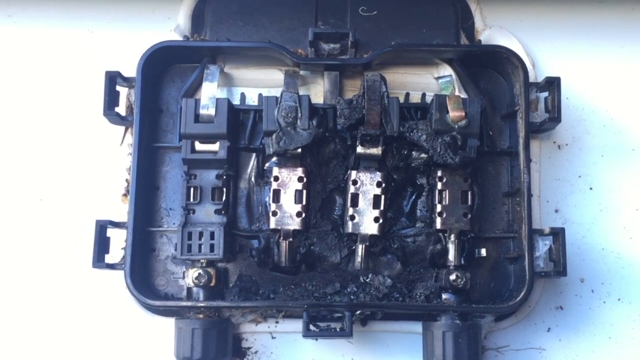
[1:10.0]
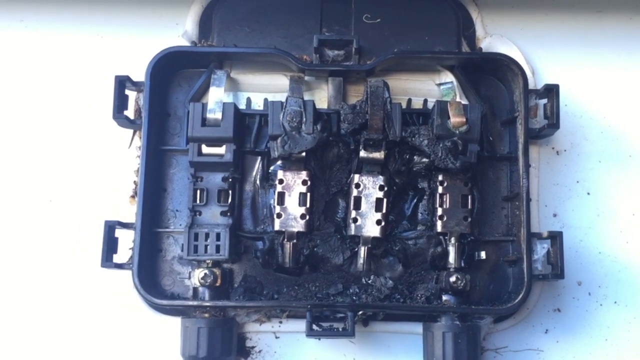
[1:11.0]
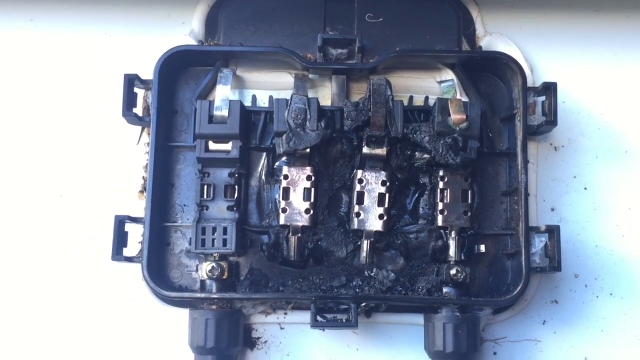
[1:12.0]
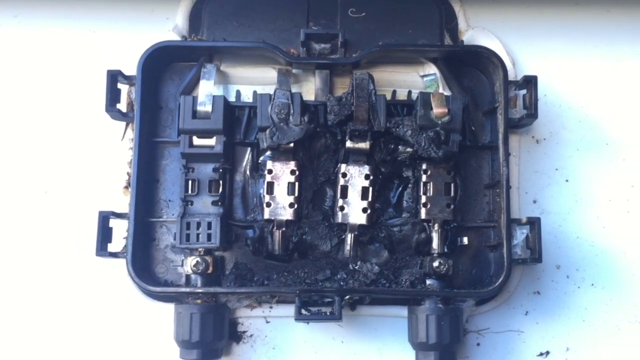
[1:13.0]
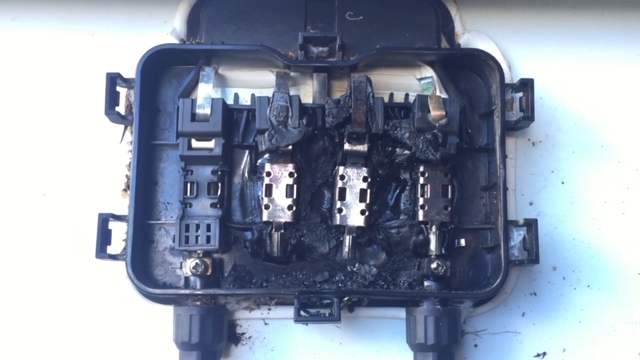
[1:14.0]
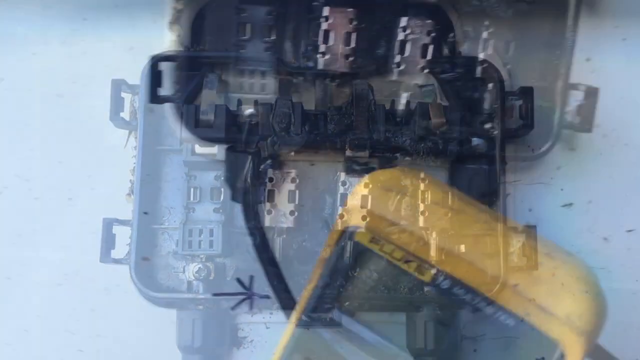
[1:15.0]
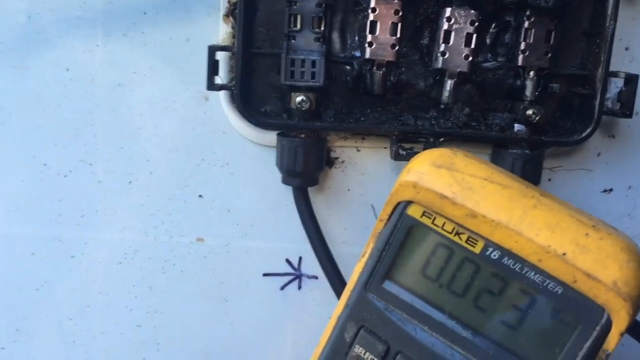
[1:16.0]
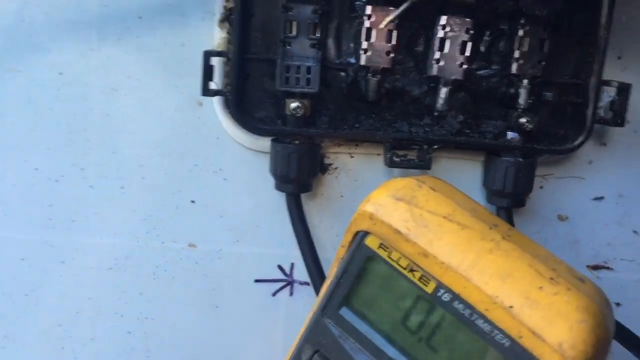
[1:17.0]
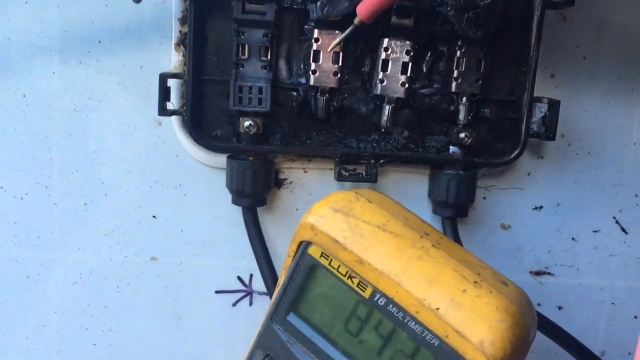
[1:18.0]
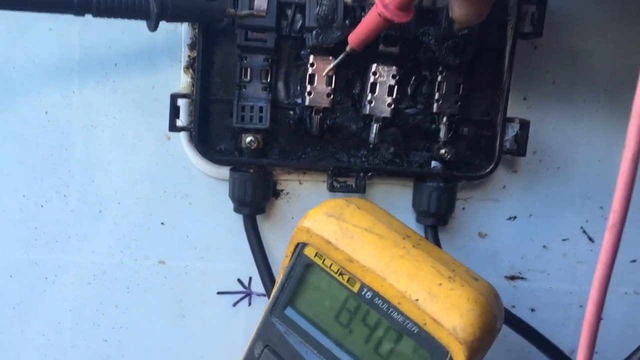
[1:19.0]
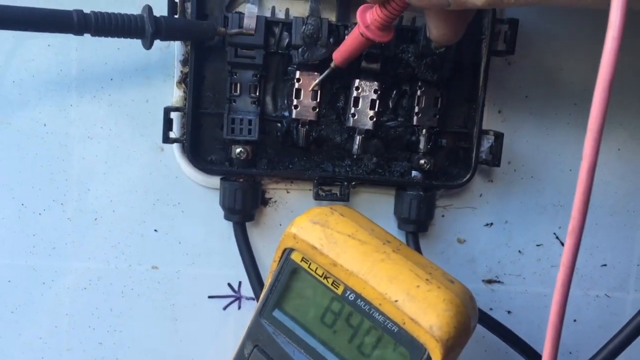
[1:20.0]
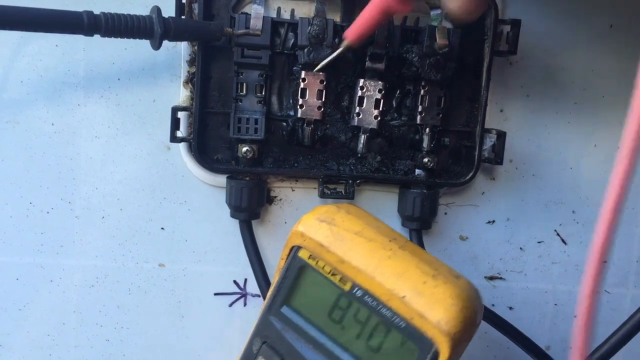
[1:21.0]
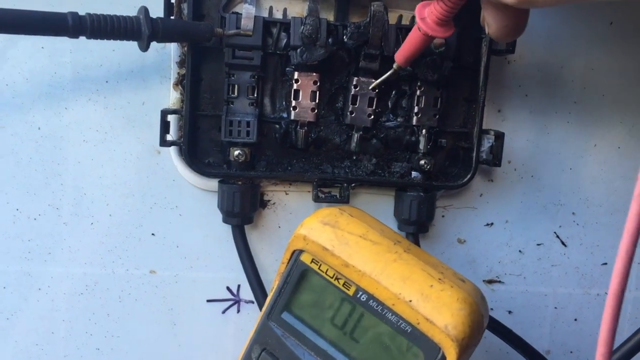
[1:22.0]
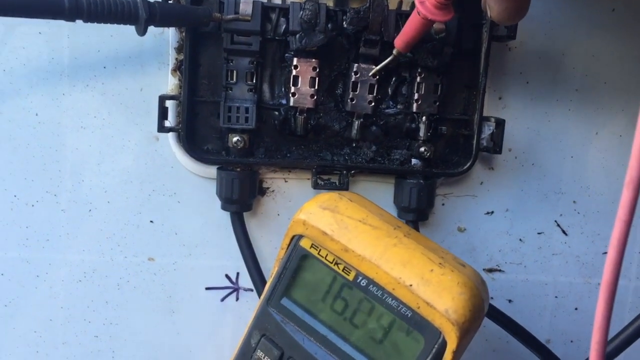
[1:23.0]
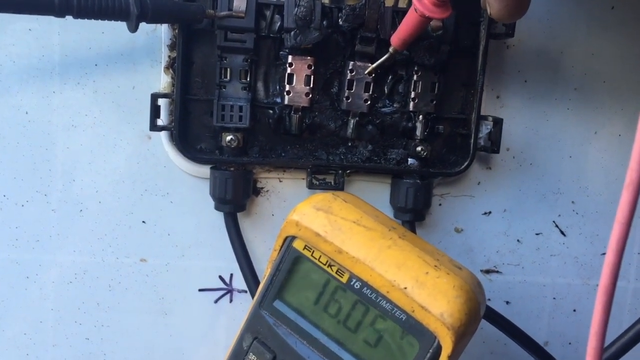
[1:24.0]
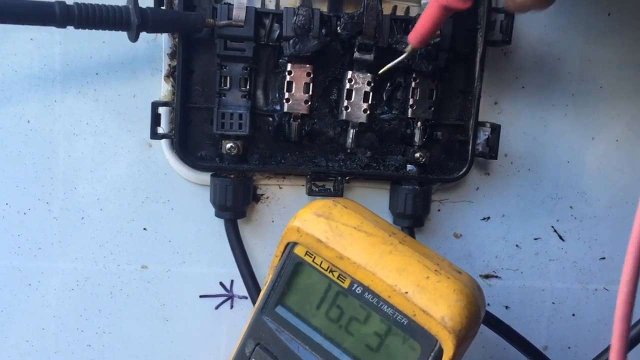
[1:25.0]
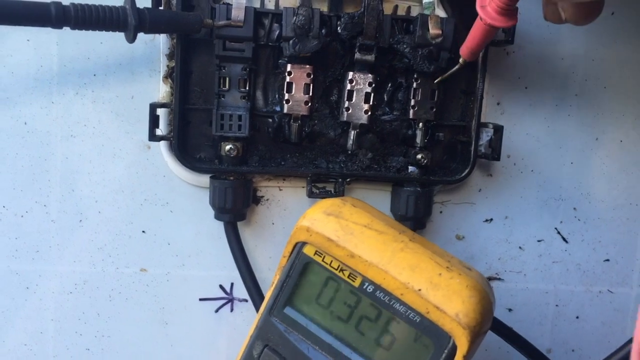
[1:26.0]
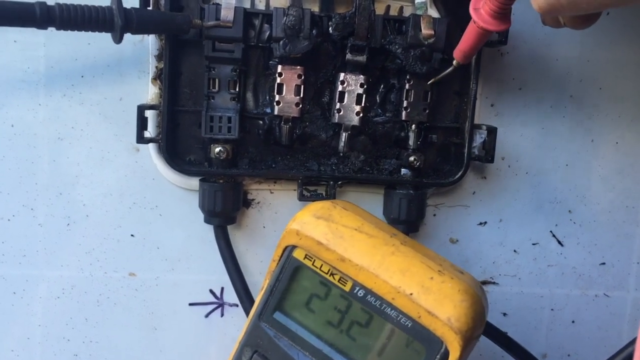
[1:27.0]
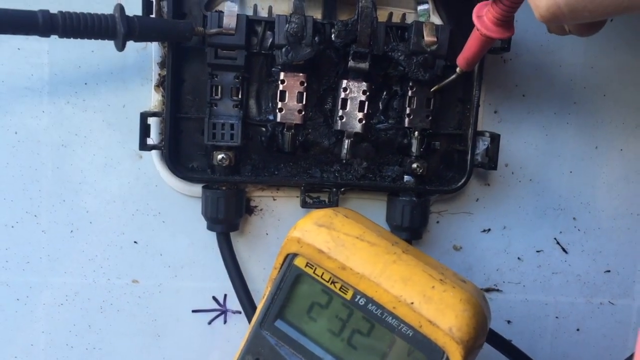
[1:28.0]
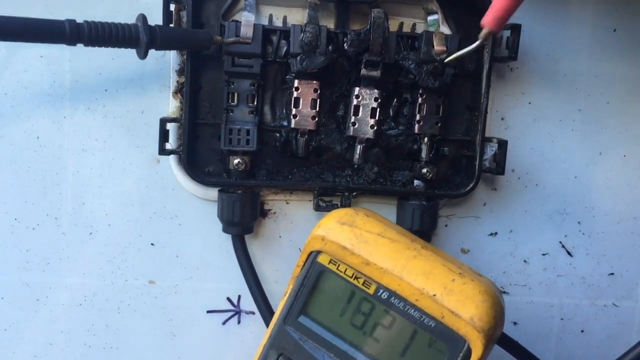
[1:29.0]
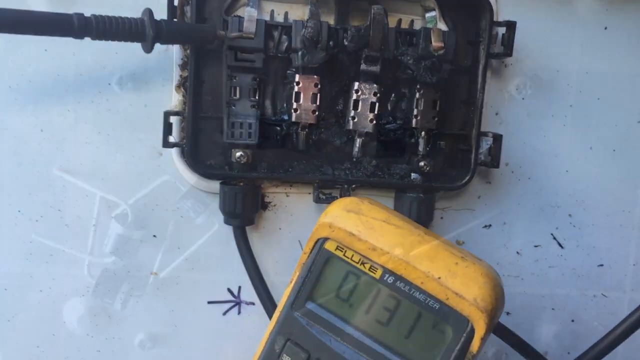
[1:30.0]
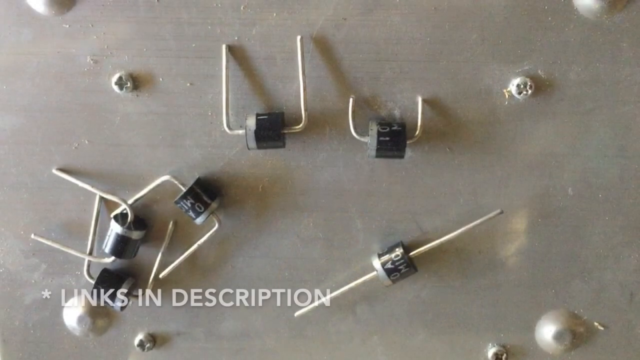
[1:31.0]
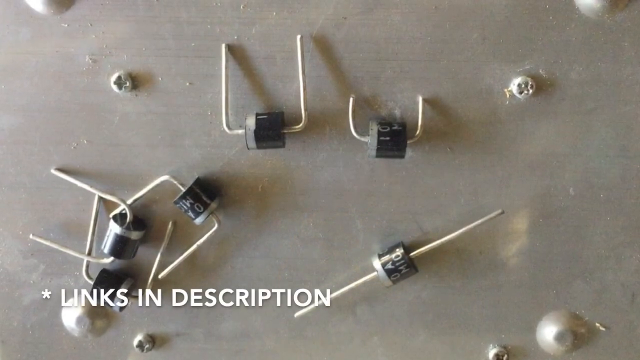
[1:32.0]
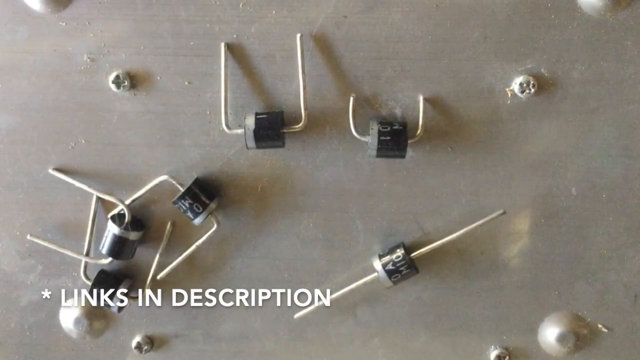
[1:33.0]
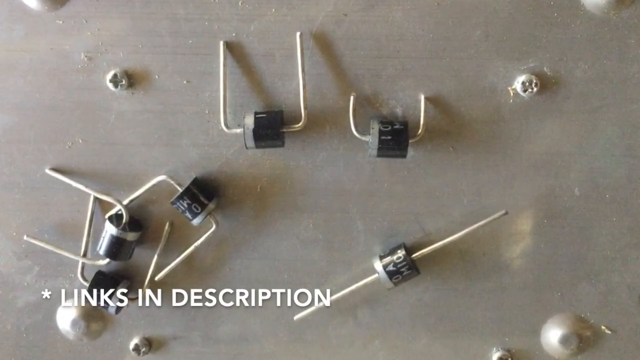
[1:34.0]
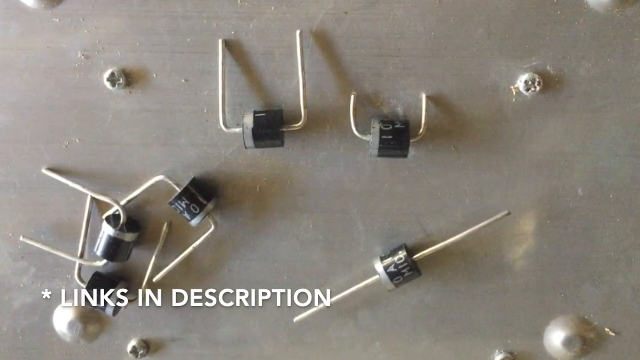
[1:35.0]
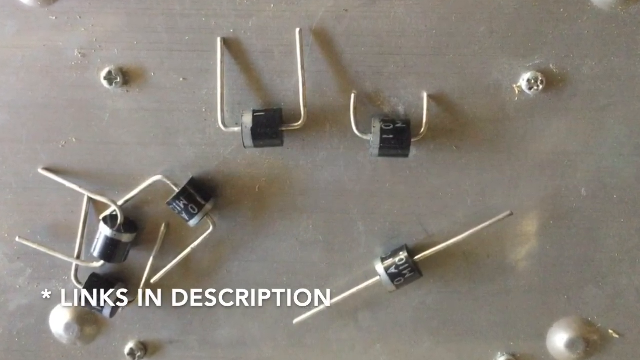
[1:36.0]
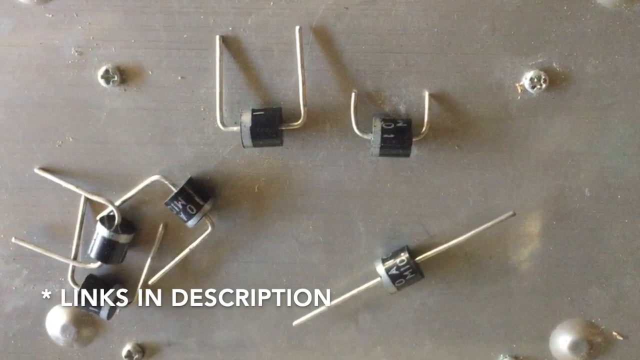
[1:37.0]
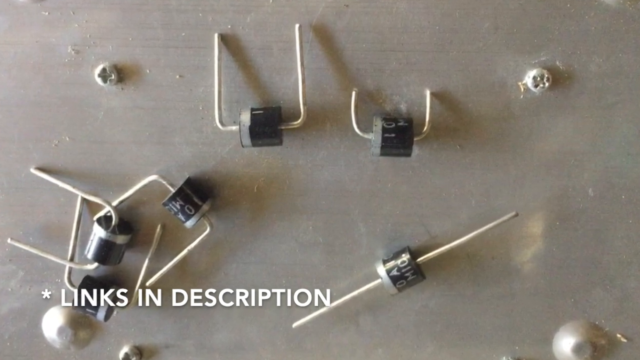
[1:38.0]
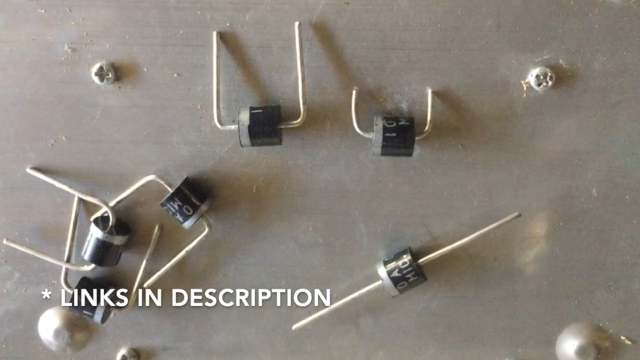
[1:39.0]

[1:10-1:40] The shot opens on what looks like a panel that has just been opened against a wall, apparently related to the solar panels outside. The top has been taken off, and inside this rectangular unit, which resembles a thermostat on a wall, are small circuit openings. Two black brackets on the left and right apparently attach it to the white wall behind it. The inside is primarily black, with small rectangular openings and small round circles, except for two white rectangular circuits in the center. The camera moves very slowly, and then a bit of a person's hand appears on the lower right, holding up what looks like a yellow tool or reading tool and bringing it up, perhaps to take readings from the black equipment on the white wall. The yellow tool has the word "Fluke" written on its top left corner, where there is a small screen; Fluke may be the brand name. The screen reads 8.40 in digital numbers, and then the numbers change to 16 and 23 as it takes its readings. The scene then changes to a gray background, either a wall, a floor or a table, with small tiny parts that look like circuits, each a little black square with a wire going through it. Text in the bottom left corner reads "links in description".